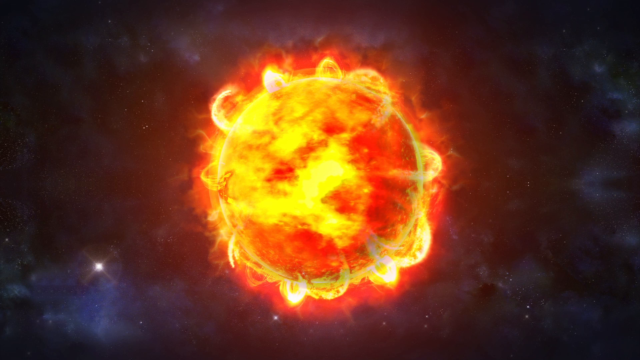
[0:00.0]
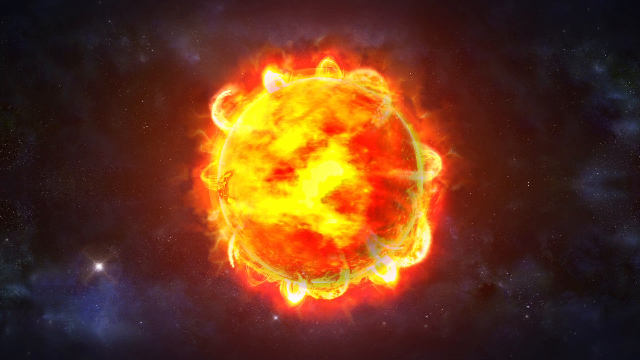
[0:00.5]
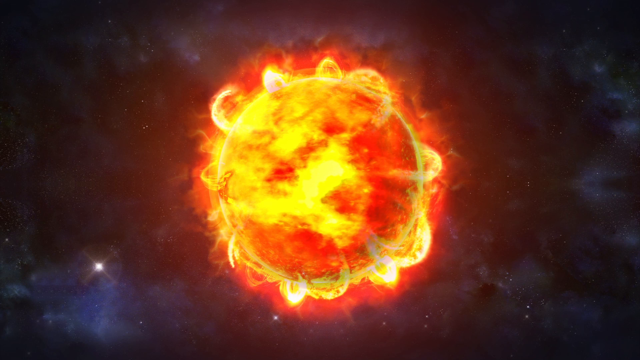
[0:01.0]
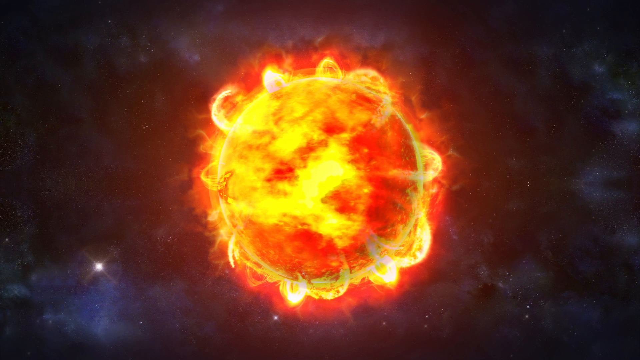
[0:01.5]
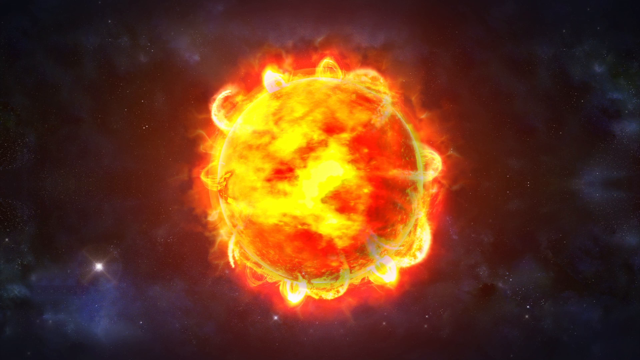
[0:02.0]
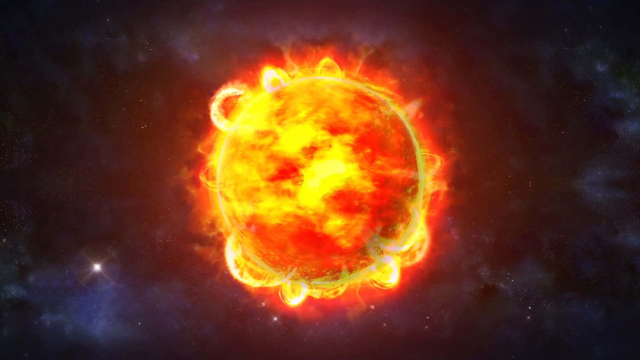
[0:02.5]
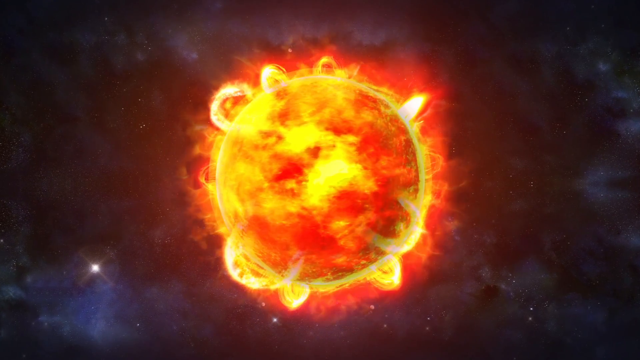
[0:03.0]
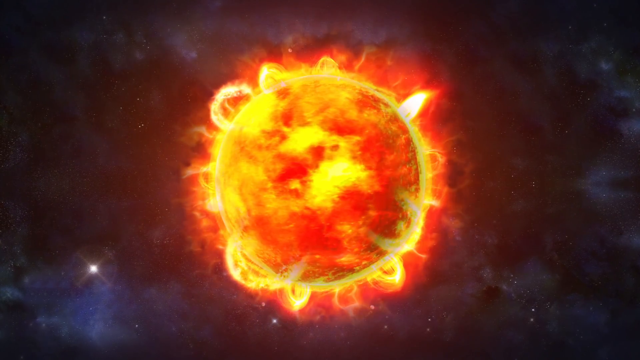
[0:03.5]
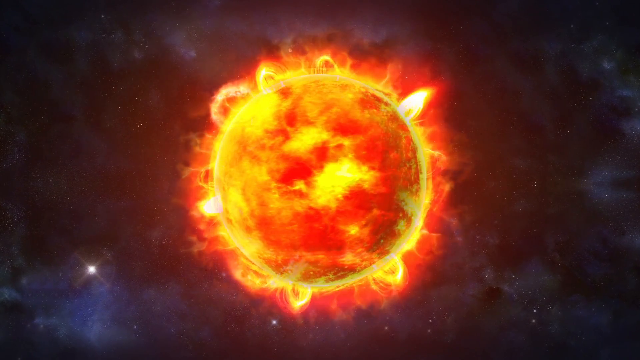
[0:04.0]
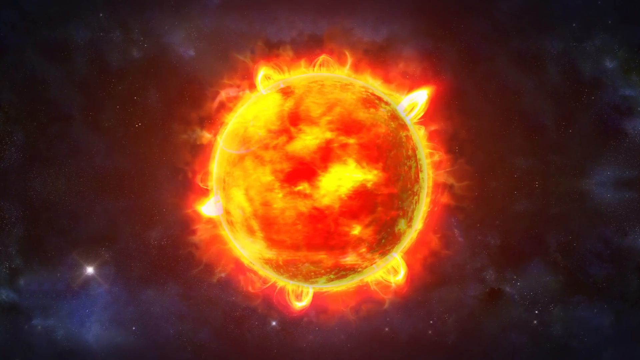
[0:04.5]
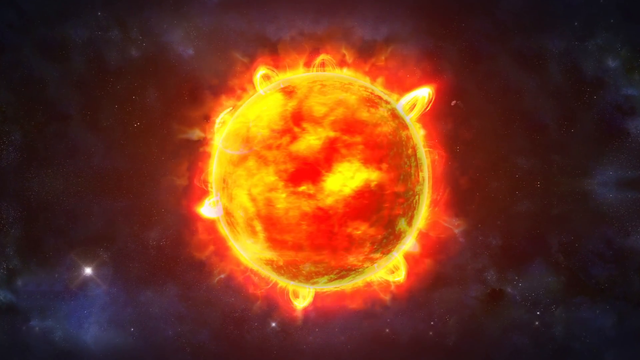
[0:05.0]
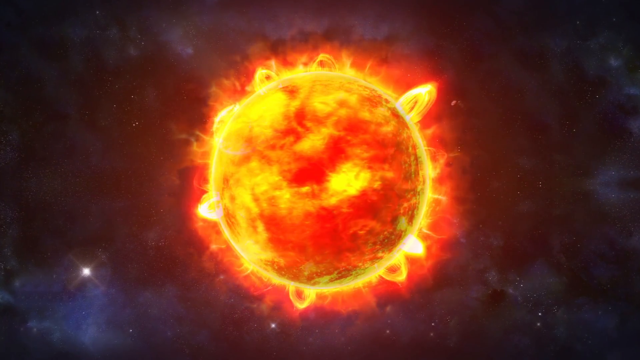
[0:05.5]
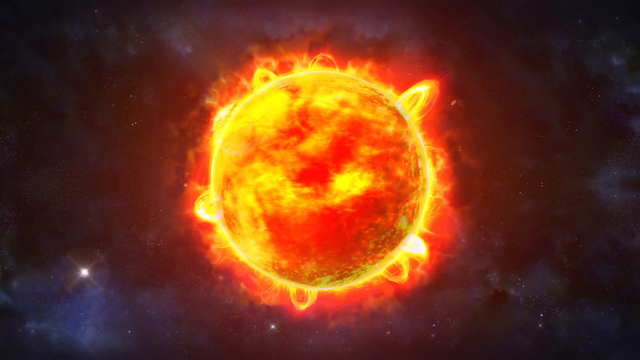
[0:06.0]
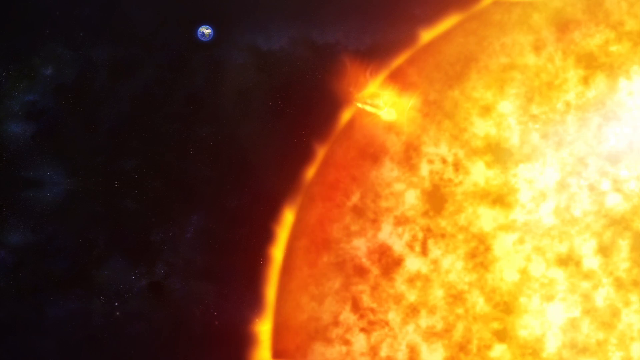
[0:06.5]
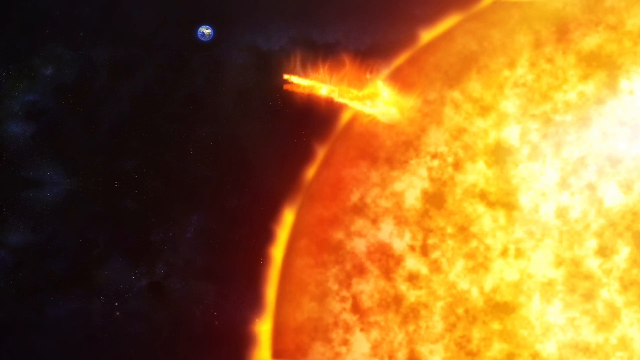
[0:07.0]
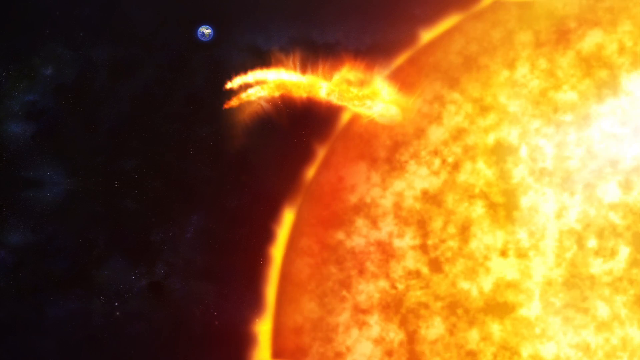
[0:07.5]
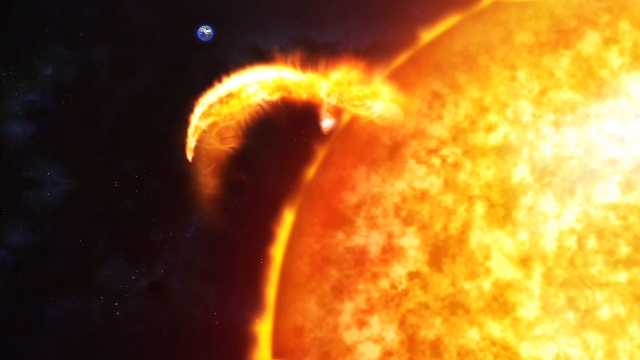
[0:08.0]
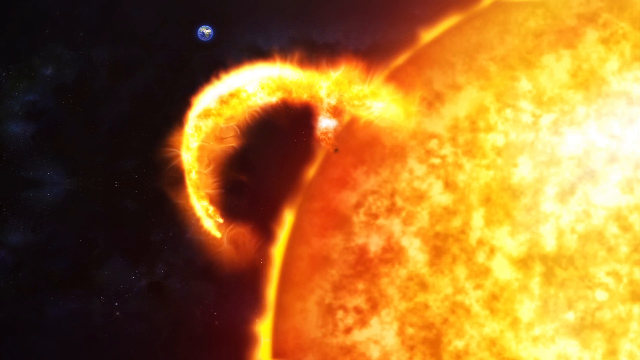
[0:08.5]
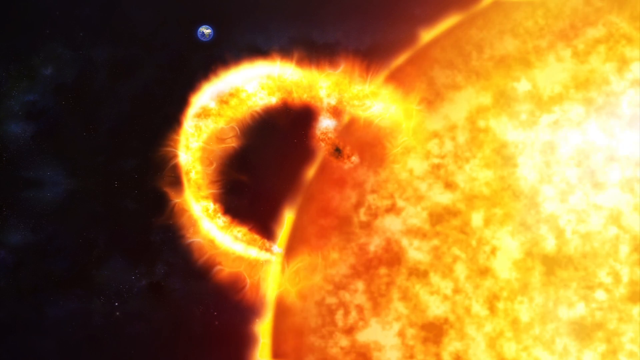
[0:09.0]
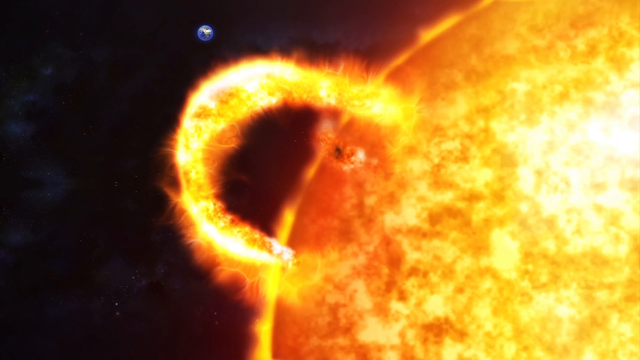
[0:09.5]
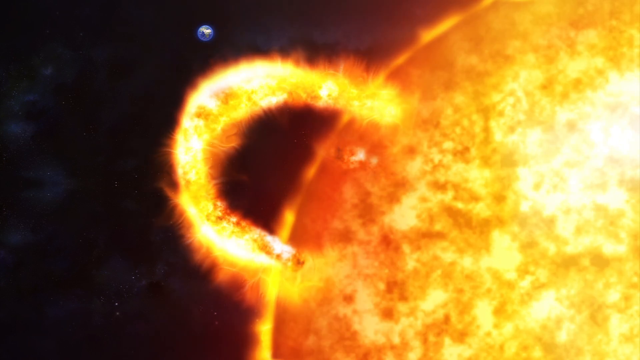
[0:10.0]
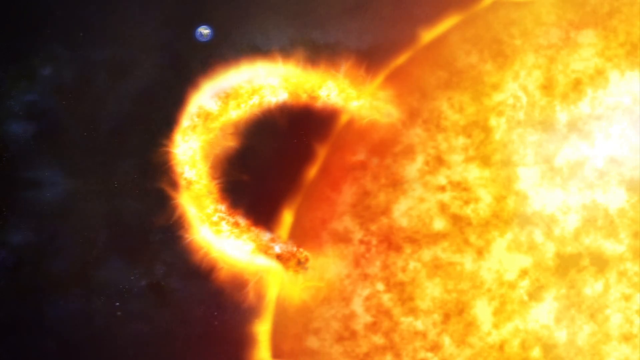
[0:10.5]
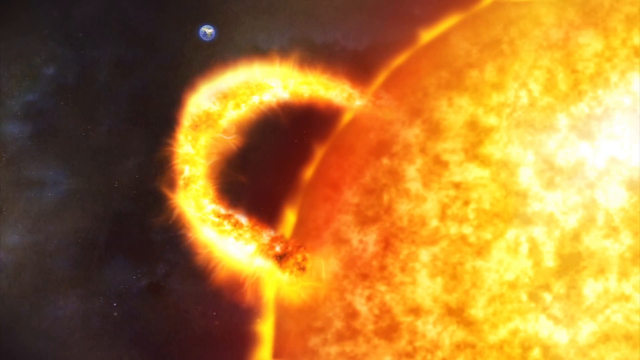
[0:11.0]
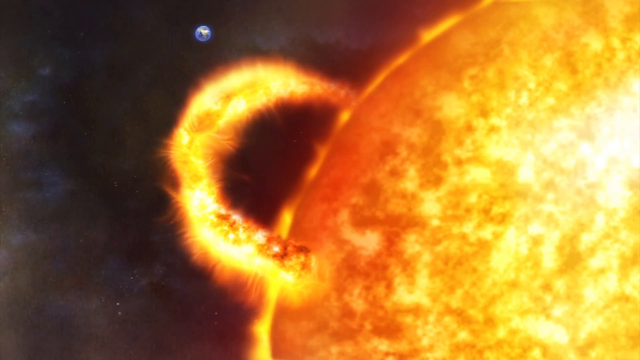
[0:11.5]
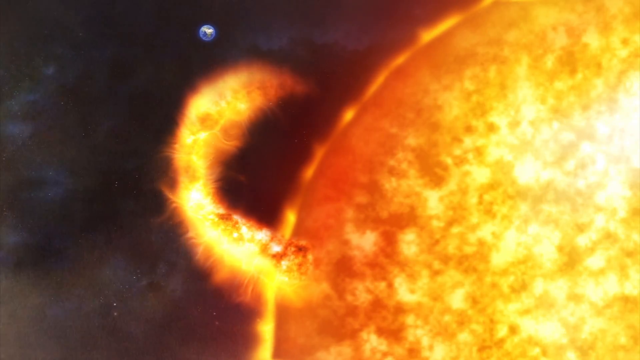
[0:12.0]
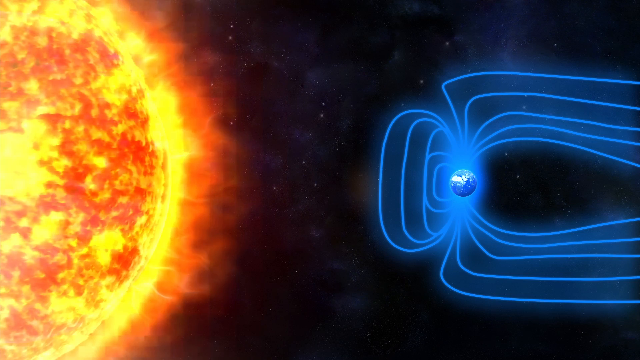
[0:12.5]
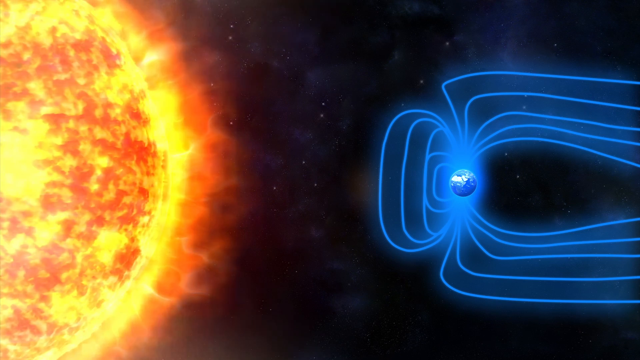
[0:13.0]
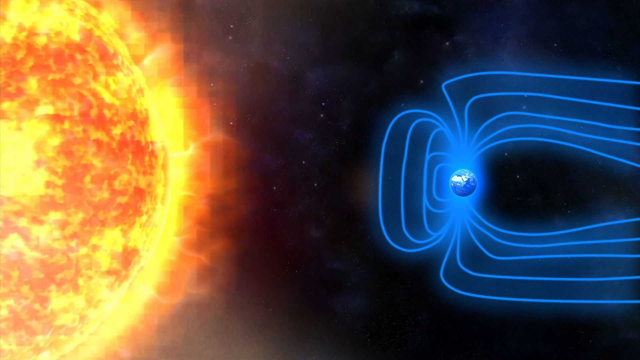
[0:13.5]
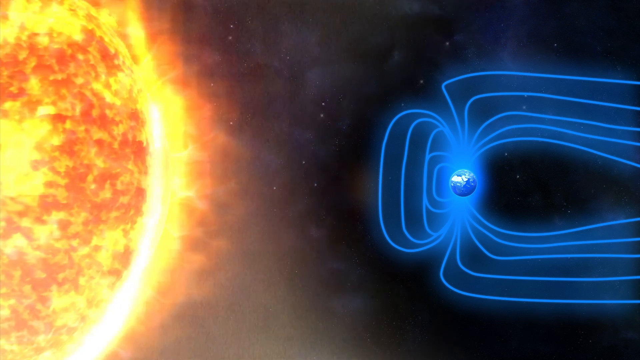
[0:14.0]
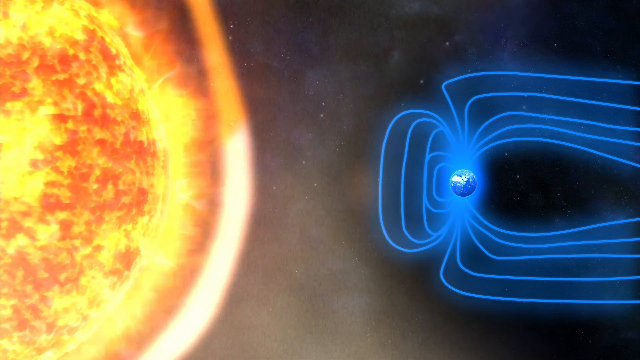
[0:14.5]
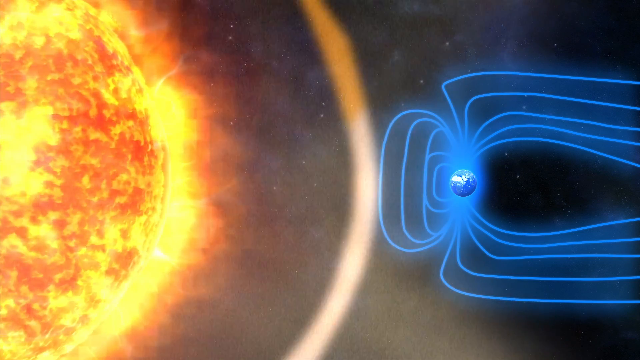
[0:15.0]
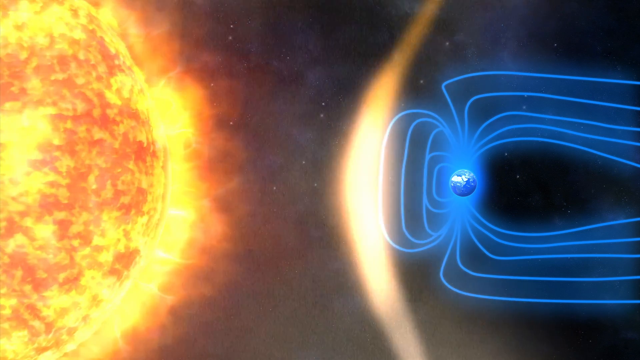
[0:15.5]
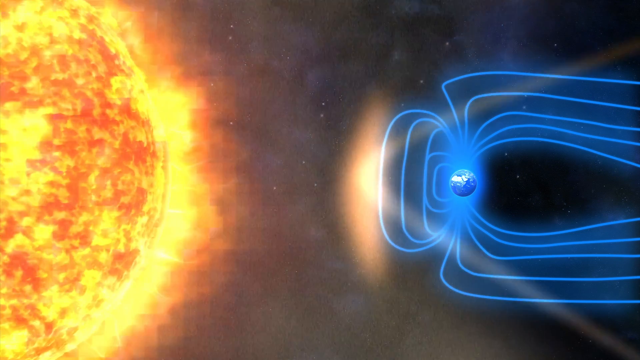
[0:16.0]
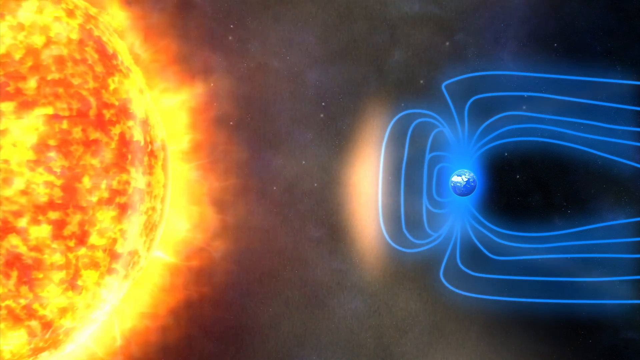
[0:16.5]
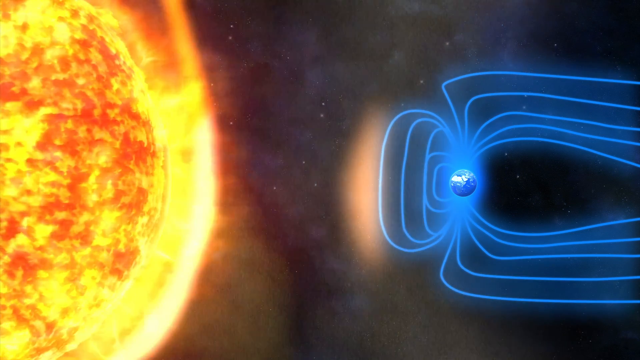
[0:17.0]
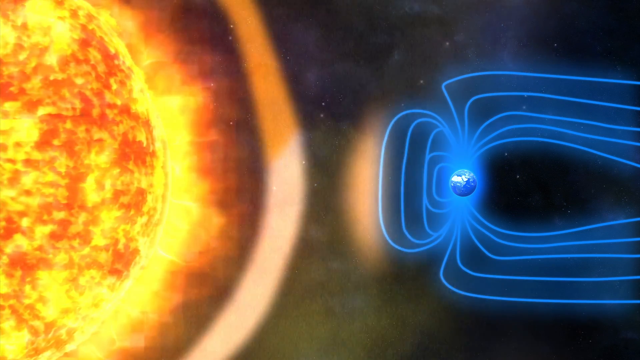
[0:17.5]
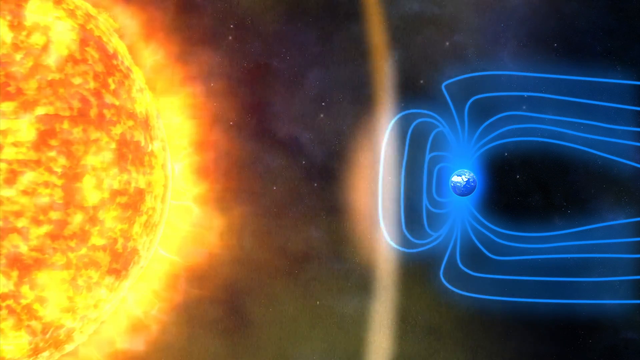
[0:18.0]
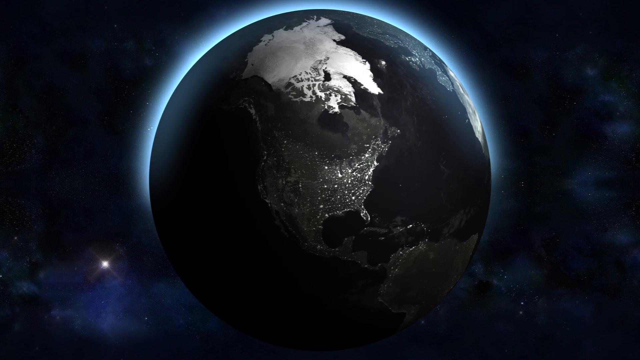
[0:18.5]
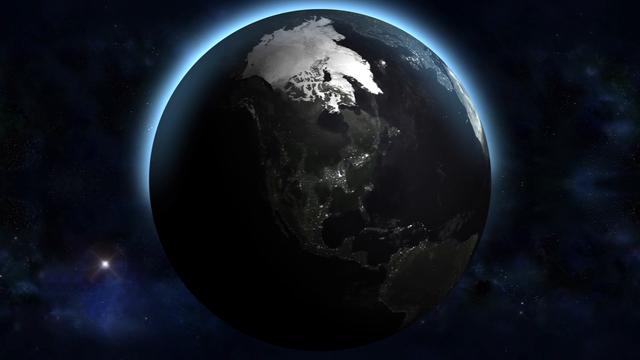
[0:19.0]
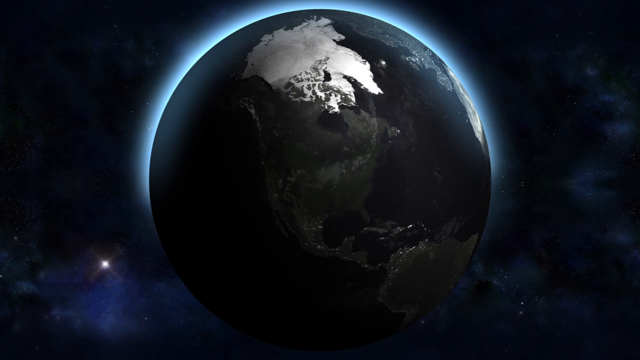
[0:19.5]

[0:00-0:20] A spinning ball that almost looks like the sun appears, colored with a lot of orange, yellow and red. It looks artistically drawn, and as it slowly spins, a sort of red haze comes off of it. An arc of flame shoots out of the sun and heads toward Earth, which is very small compared to the sun and appears off in the distance as the solar flare shoots outward. There are kind of some blue lines around the Earth. Lights turn off in one section of the Earth, apparently showing power being shut off there. A few stars, or glowing balls, are in the background. As the arcs of solar flares shoot out, they kind of form one big arc that shoots toward the Earth in that area.